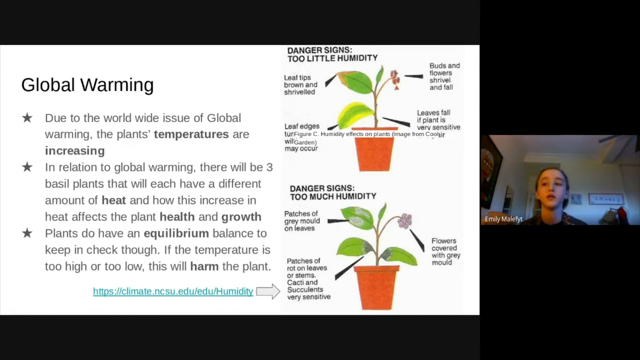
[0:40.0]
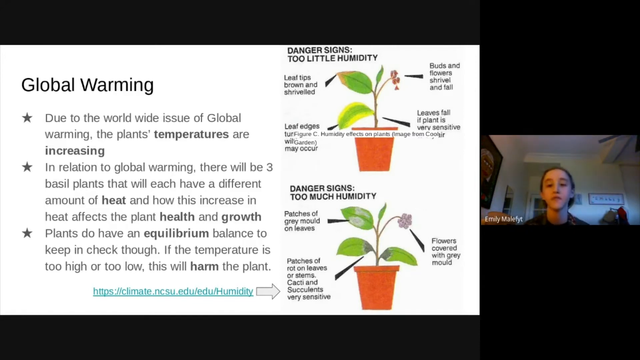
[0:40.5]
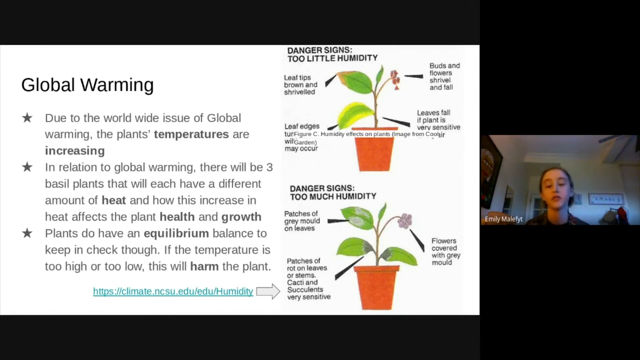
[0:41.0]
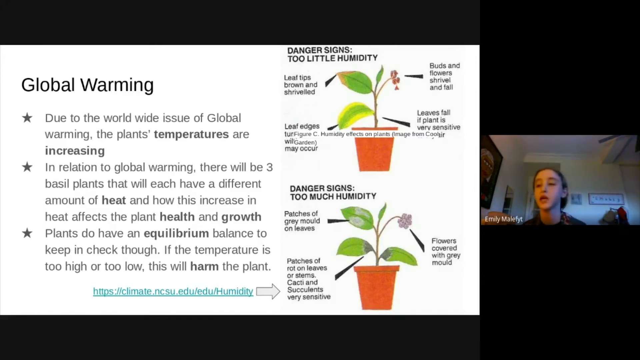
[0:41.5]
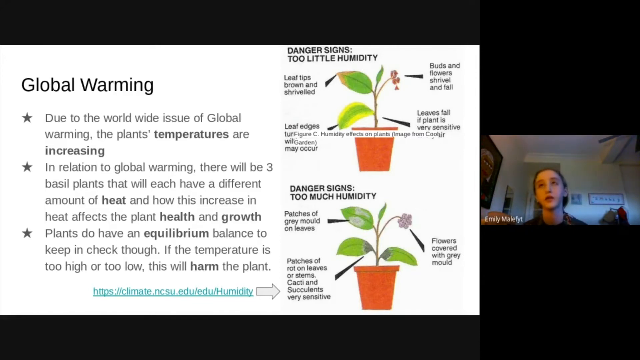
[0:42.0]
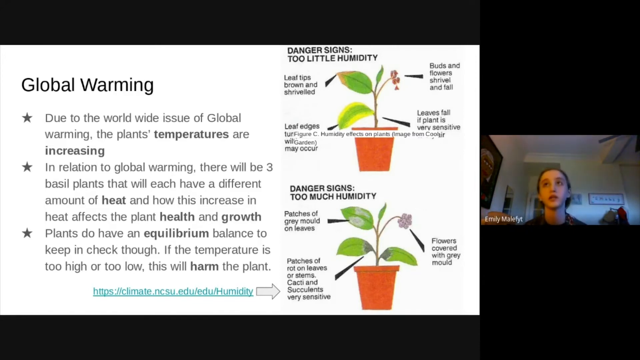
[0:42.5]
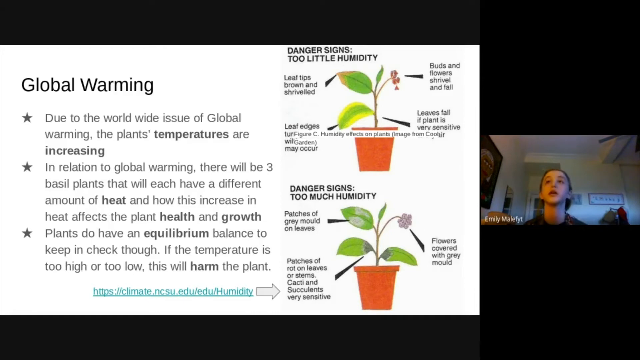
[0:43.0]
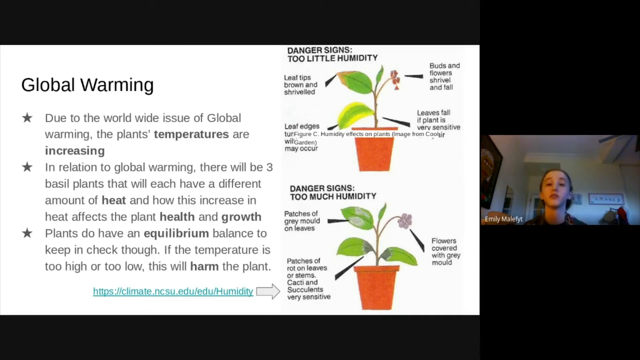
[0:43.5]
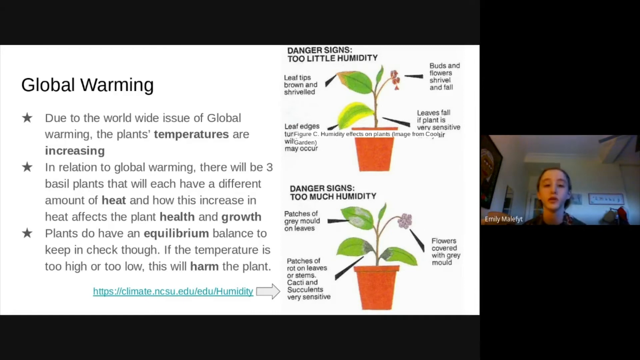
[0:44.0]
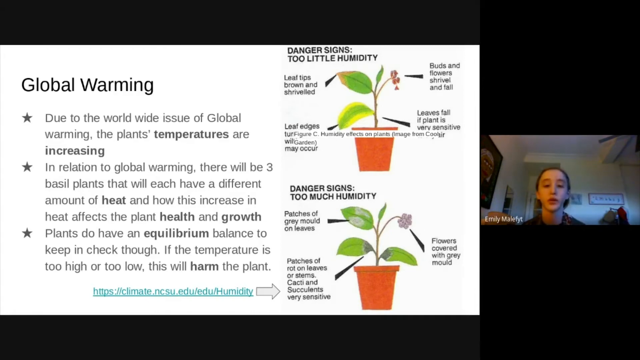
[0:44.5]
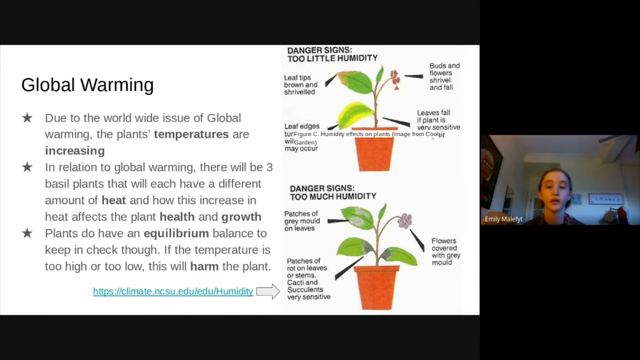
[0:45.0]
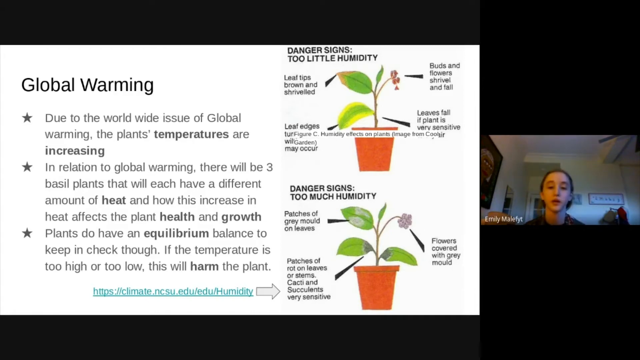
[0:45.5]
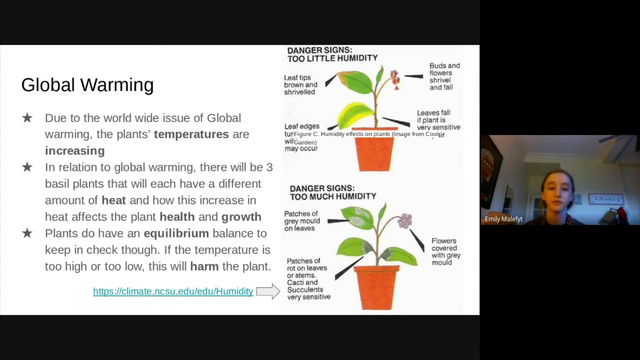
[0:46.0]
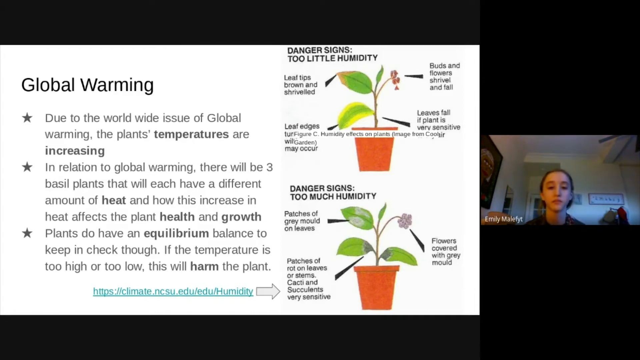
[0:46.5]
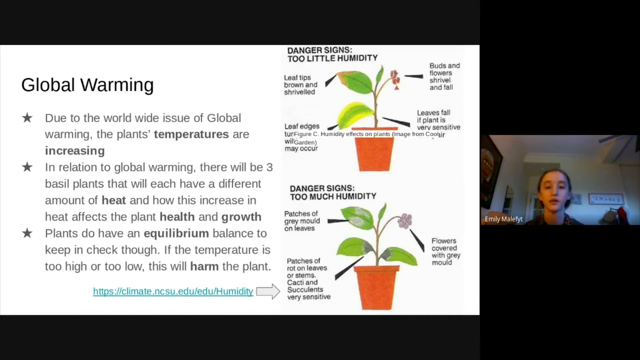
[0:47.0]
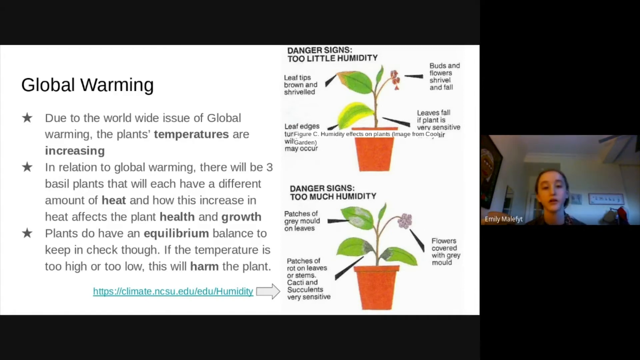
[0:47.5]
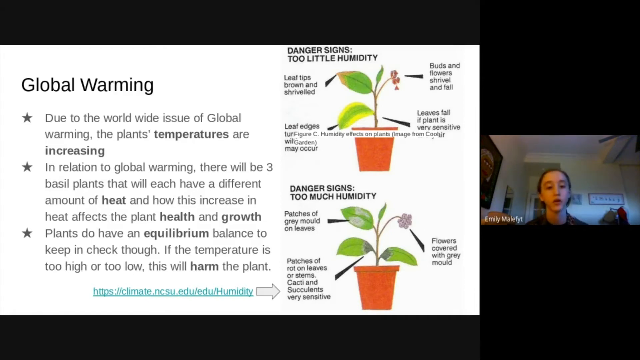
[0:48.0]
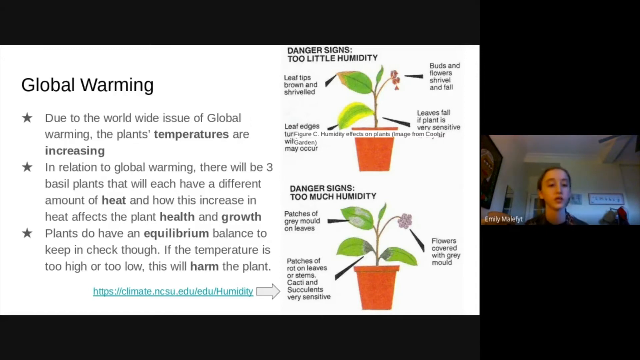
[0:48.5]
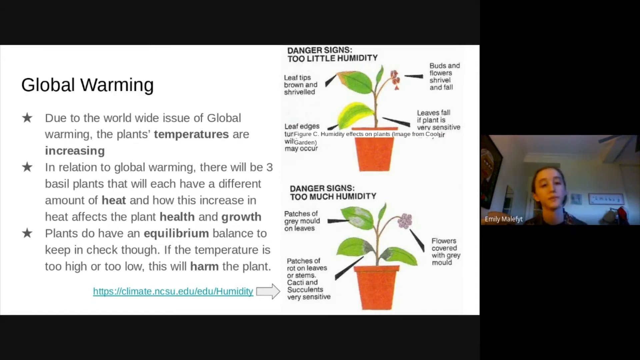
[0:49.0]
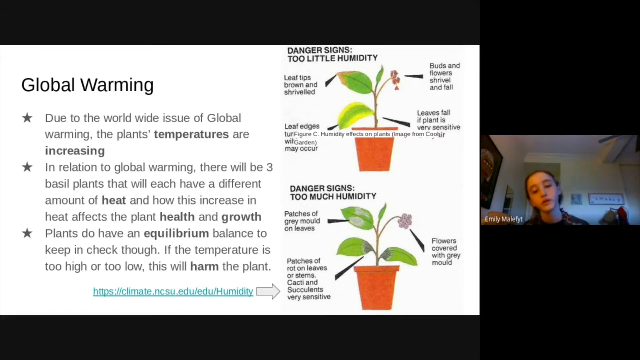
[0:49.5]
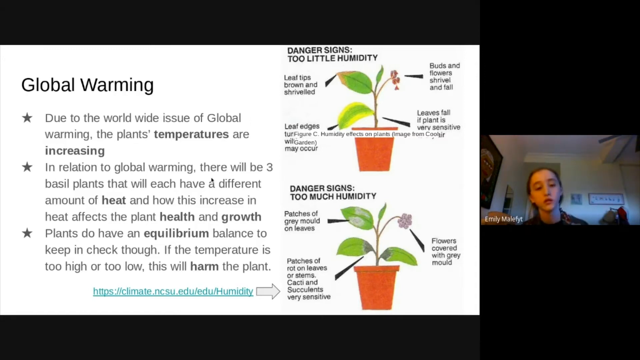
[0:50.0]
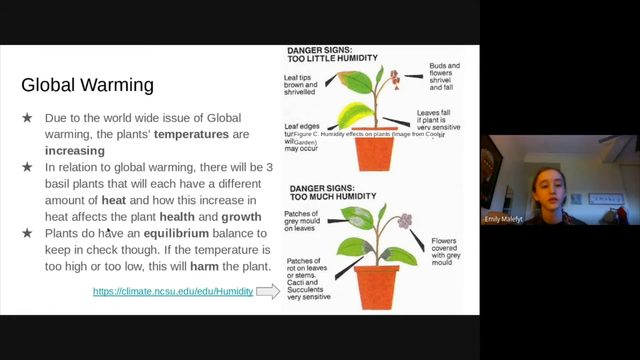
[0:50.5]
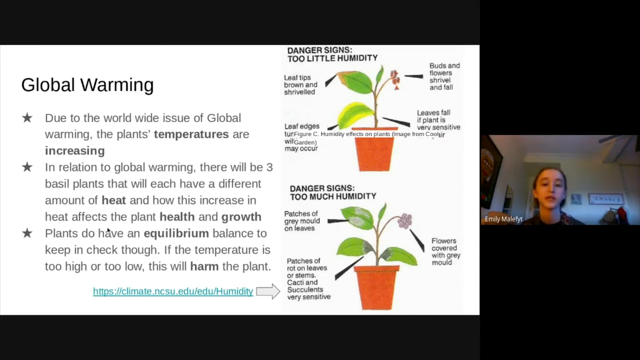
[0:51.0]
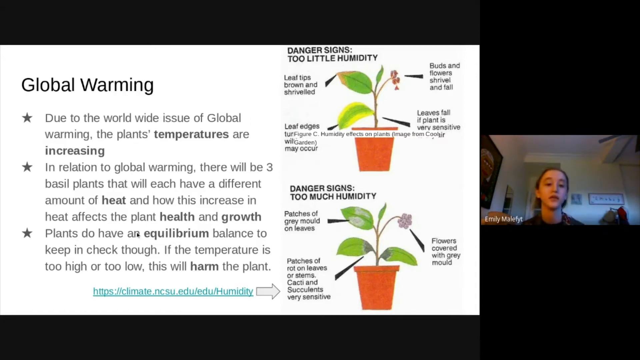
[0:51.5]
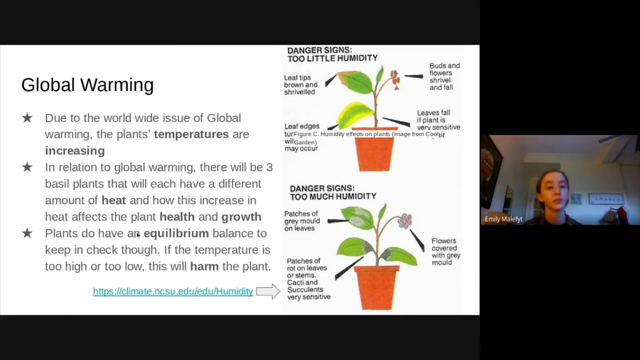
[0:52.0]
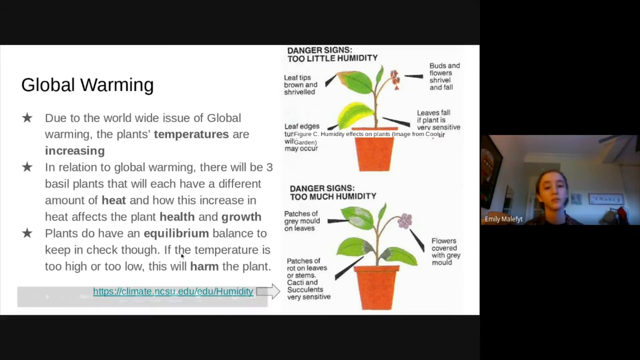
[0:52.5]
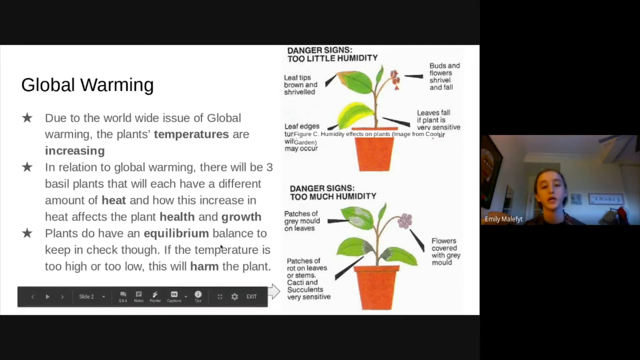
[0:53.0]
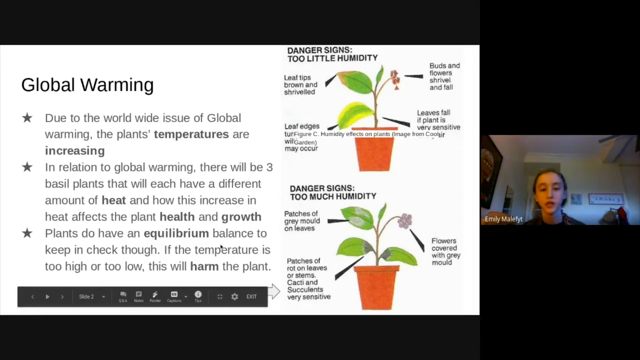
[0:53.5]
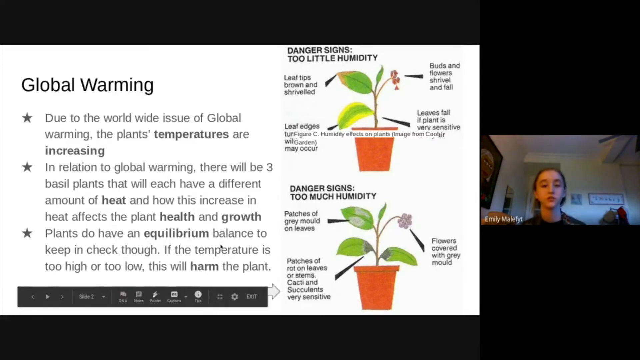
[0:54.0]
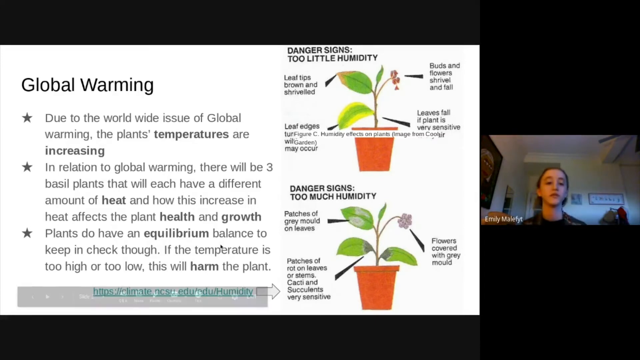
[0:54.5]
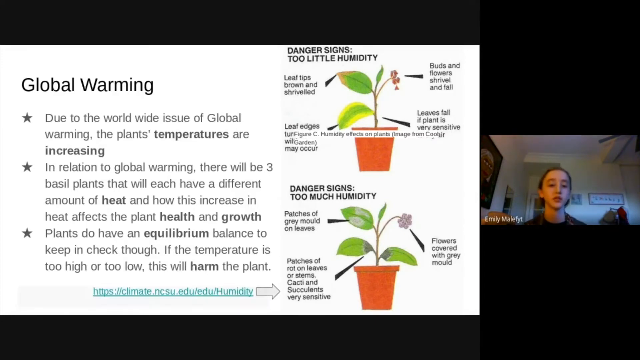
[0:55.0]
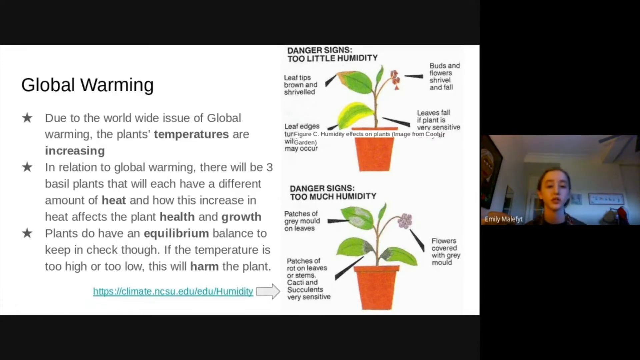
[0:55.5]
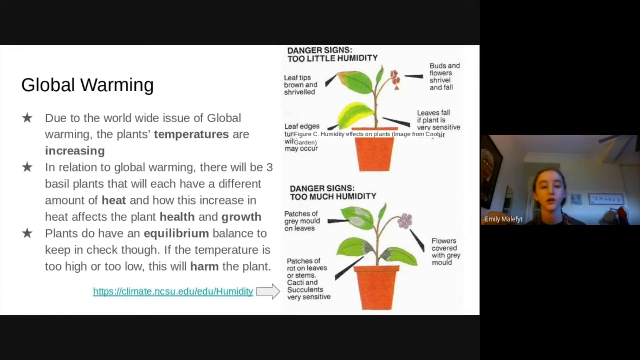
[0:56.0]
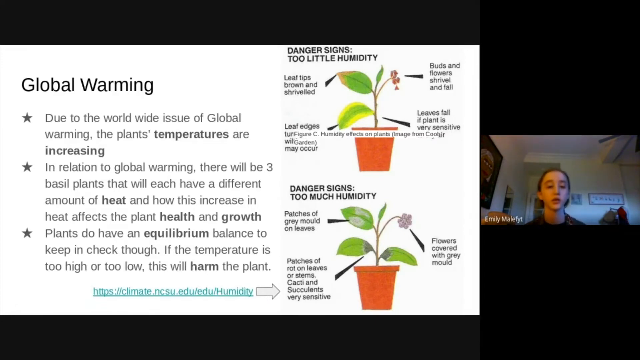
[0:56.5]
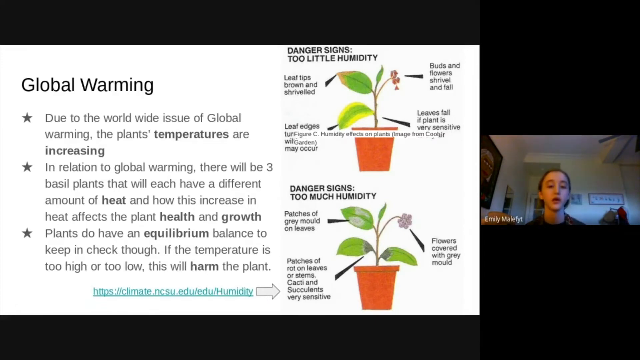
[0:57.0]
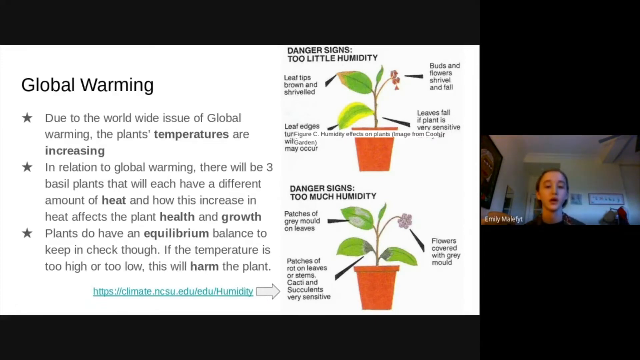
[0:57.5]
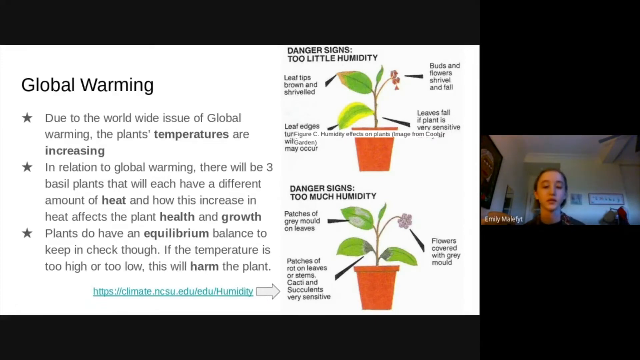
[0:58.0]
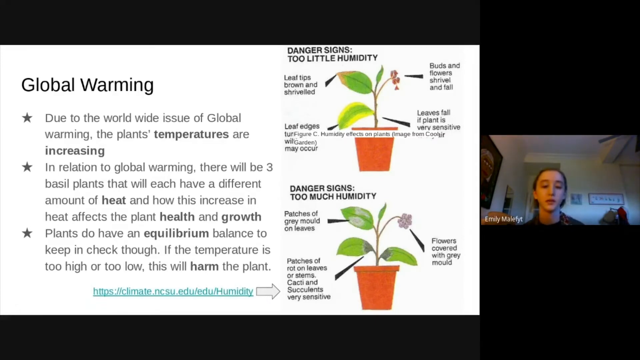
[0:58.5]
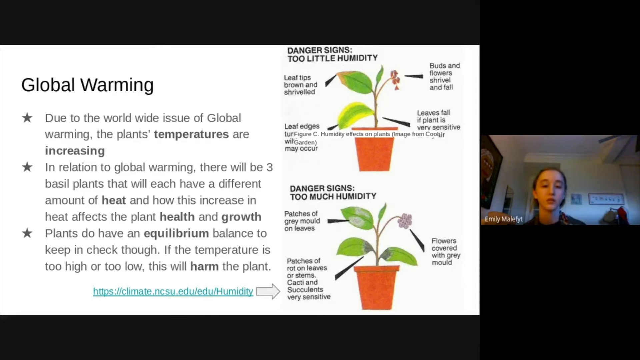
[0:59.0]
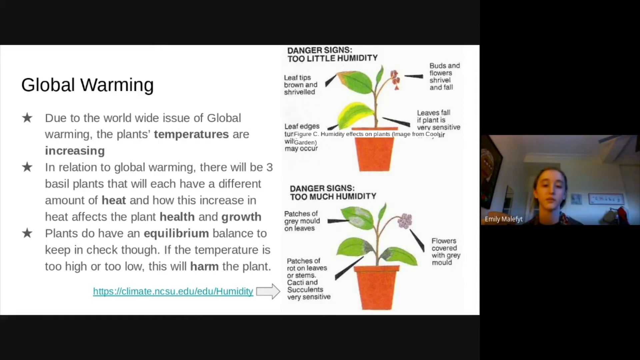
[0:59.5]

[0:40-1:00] The global warming slide stays on screen as Emily continues to speak, angling her head slightly left to right. After a few seconds, her cursor comes into view from the bottom left and hovers over the text of the content, then slightly over the presentation settings, so a toolbar of available settings opens in the bottom left-hand corner of the presentation before quickly disappearing. She moves the mouse for a few seconds, then stops using it, leaving the cursor in the middle of the text, and it eventually disappears. Emily seems to keep speaking throughout this.